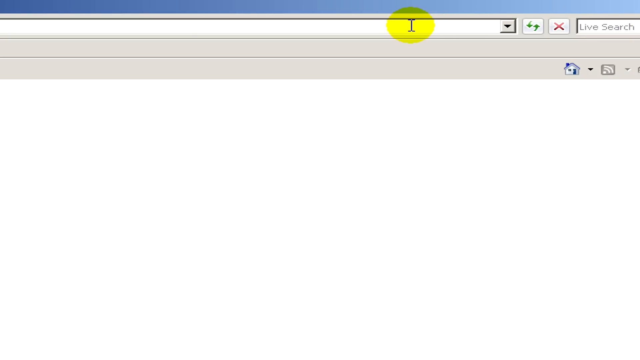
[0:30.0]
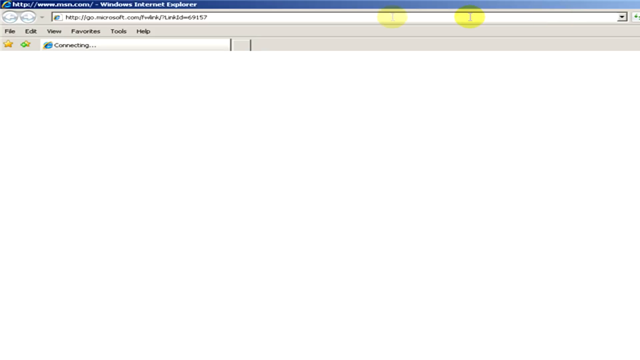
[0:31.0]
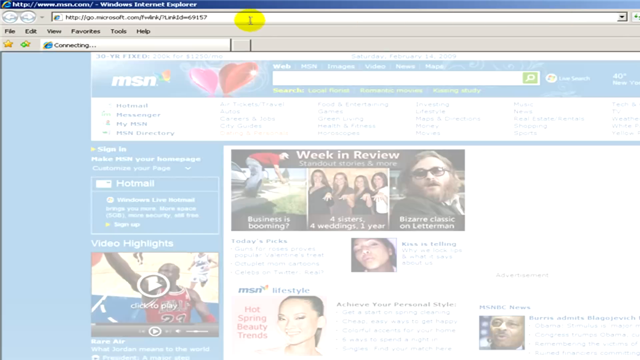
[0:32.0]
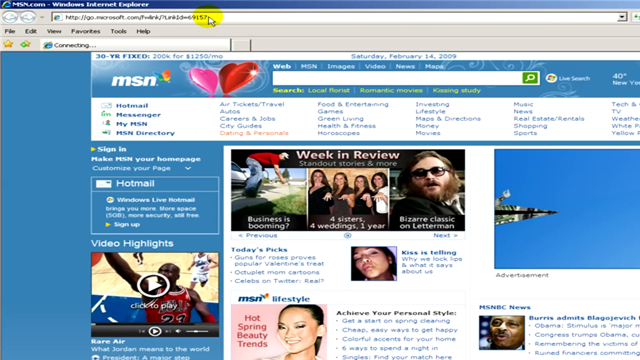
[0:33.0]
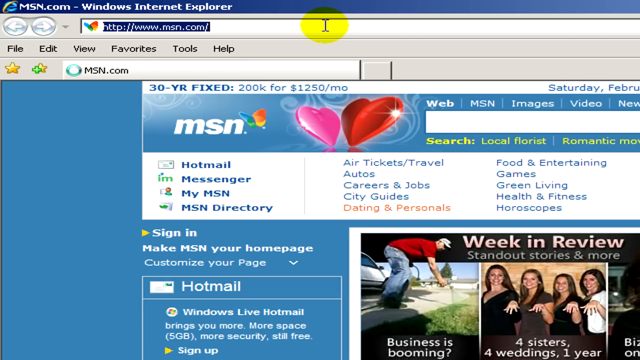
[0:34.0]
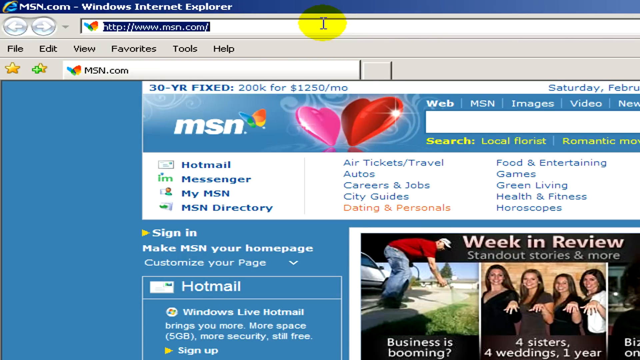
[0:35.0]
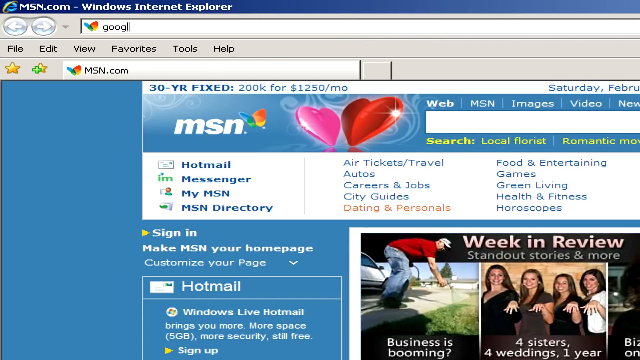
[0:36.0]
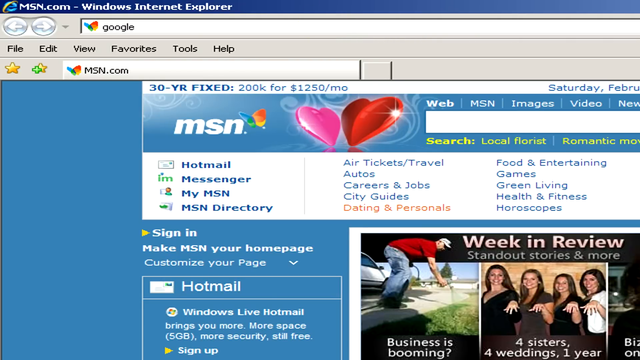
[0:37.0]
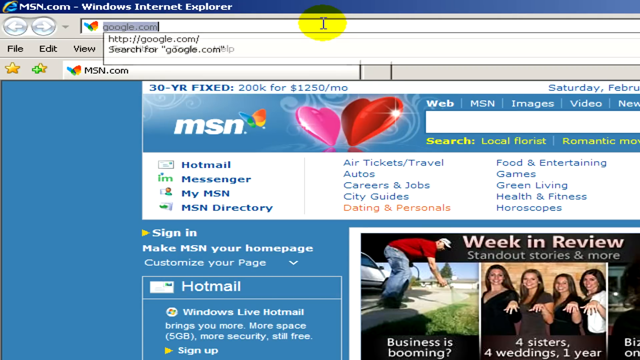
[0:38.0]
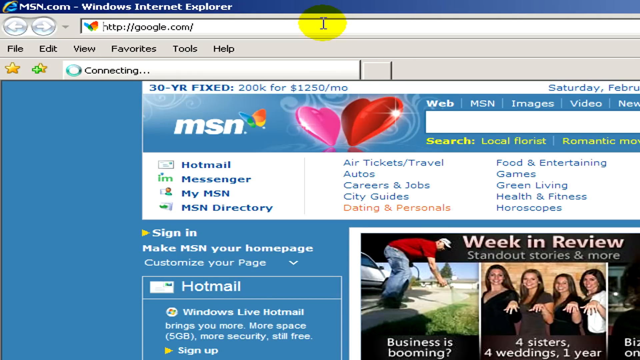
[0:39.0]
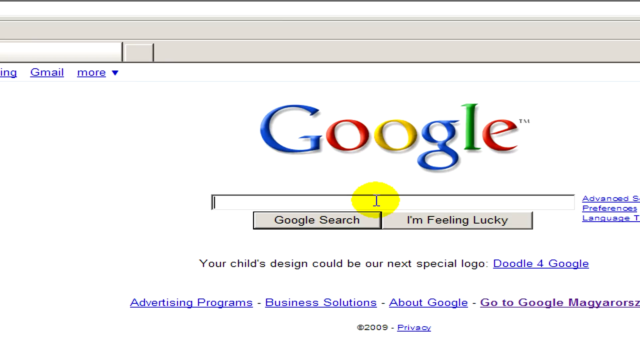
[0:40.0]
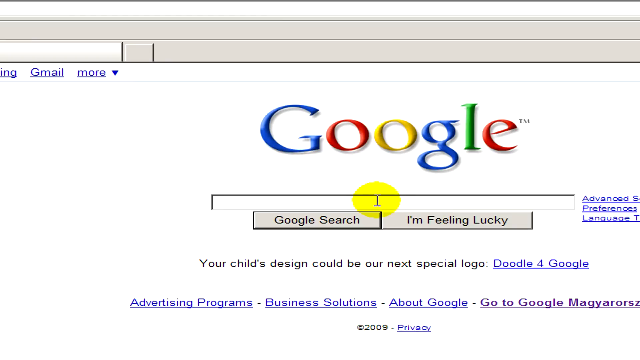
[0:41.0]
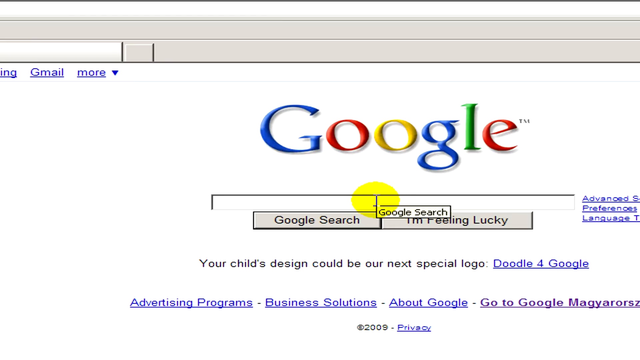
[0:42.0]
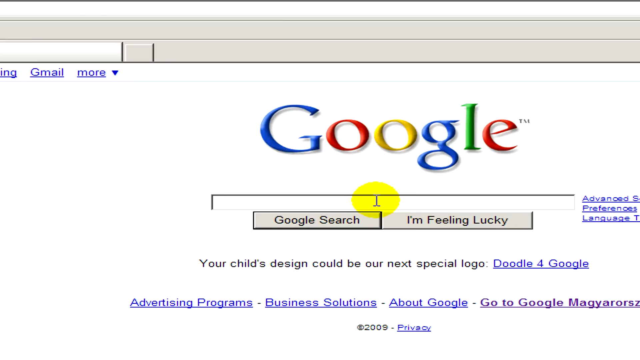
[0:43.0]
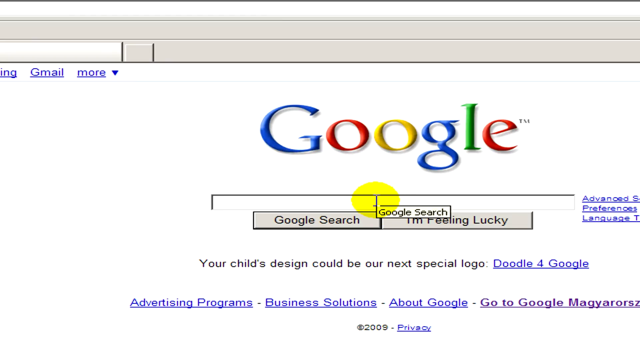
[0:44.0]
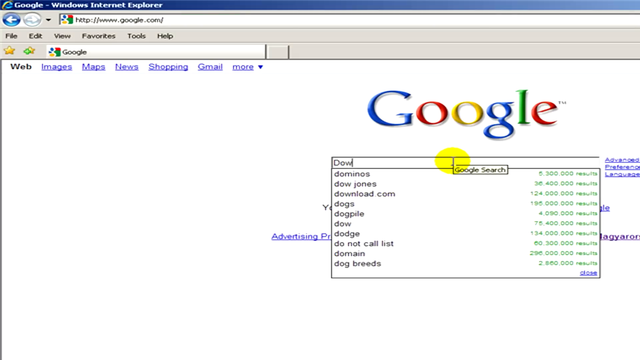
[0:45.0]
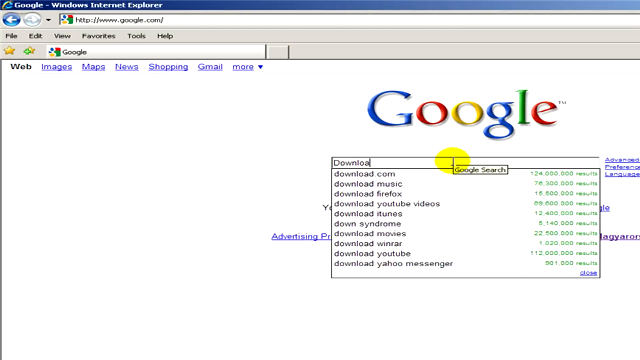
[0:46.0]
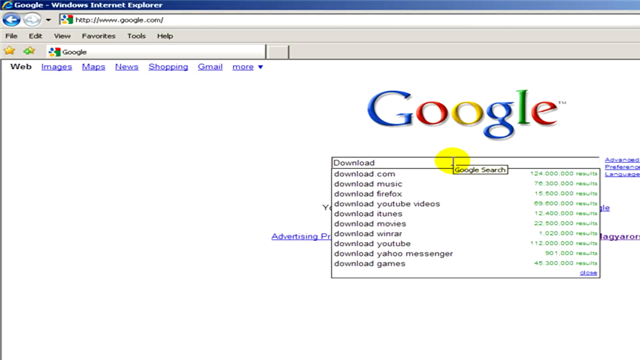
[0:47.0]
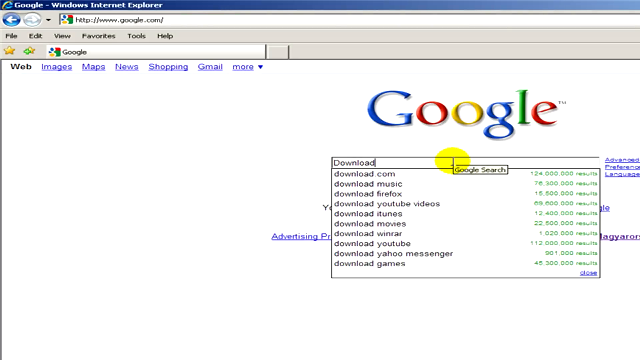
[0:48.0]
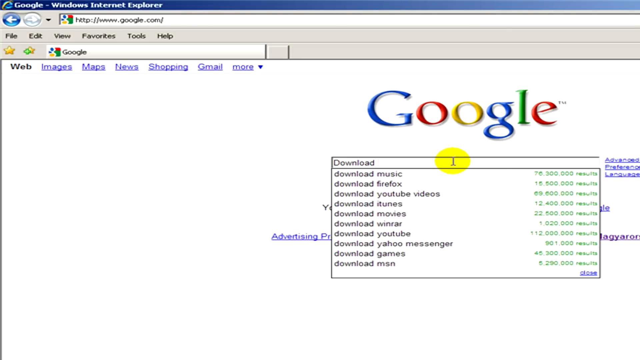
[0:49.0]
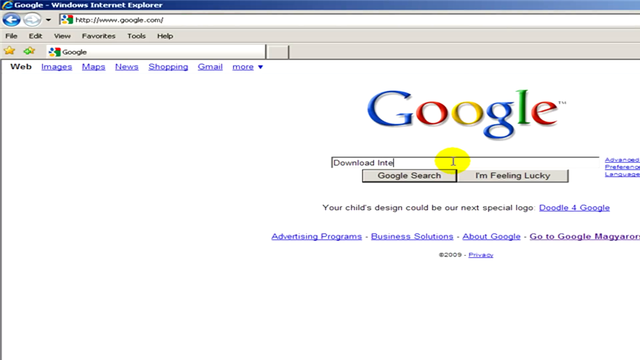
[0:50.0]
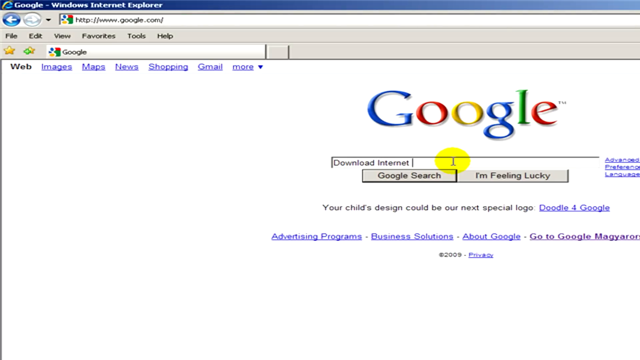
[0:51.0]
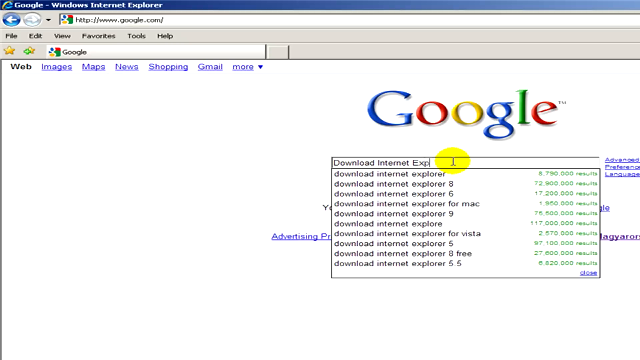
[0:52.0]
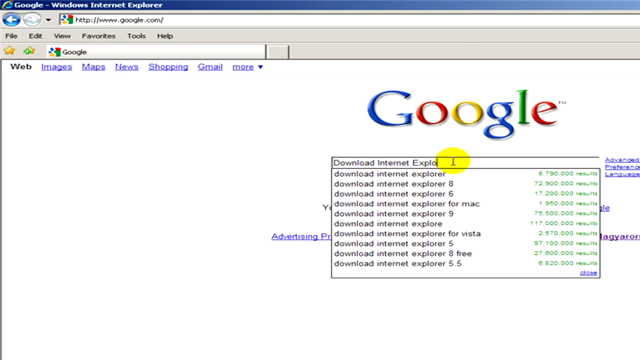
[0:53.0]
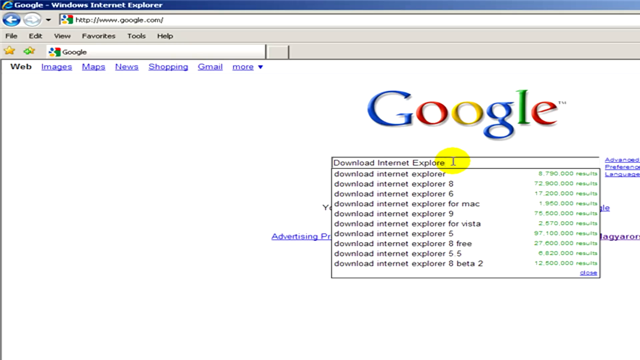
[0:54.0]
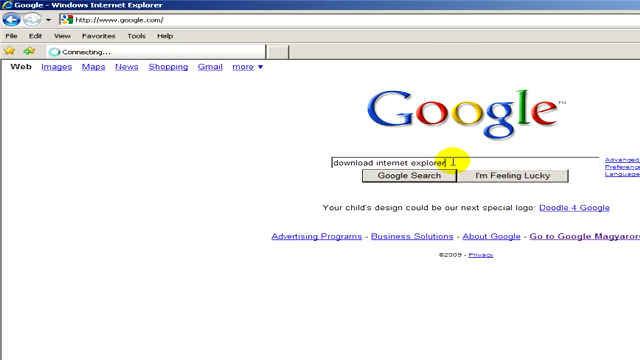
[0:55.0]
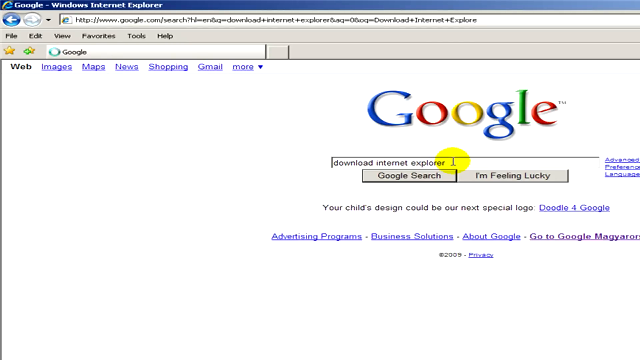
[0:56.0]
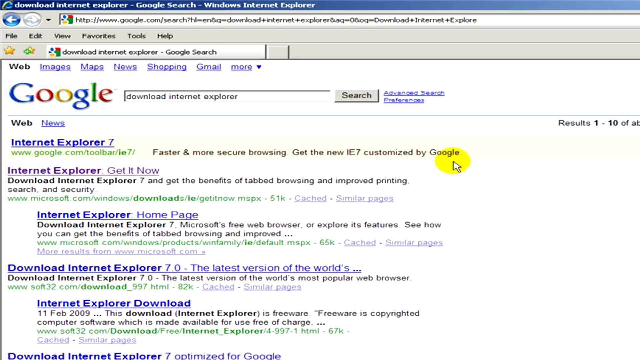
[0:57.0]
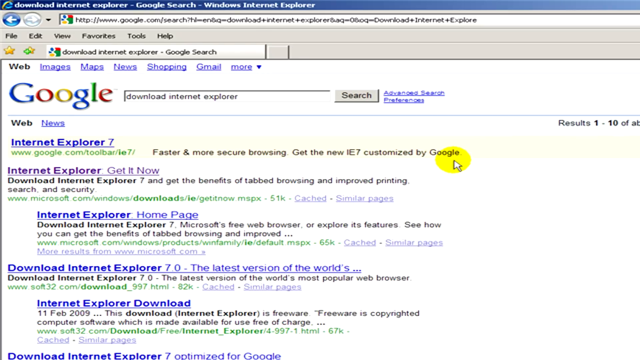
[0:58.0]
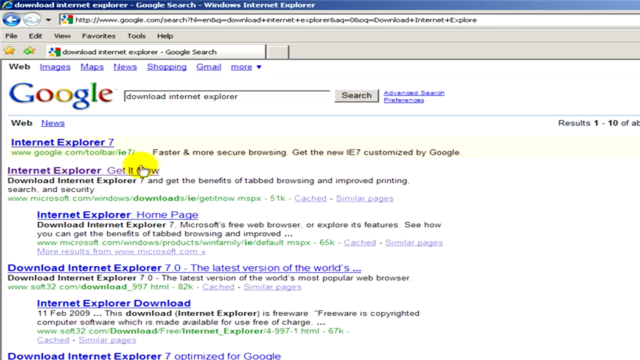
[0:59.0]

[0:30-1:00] The search bar at the top right of Internet Explorer is shown, and then the cursor goes to the main search bar and runs a search, going to Microsoft.com, where MSN is searched. The MSN.com page appears with information on it, including reviews and a Hotmail tab. There are no real people, but the main MSN page has a static image of a man in denim jeans, a red shirt and a hat, and four women holding their hands out. From MSN, the browser goes to the older-style Google.com homepage, showing the Google letters and the buttons "Google search" and "I'm feeling lucky". "Download Internet Explorer" is searched in Google, and results appear with information about Internet Explorer 7 and a download link for Internet Explorer.